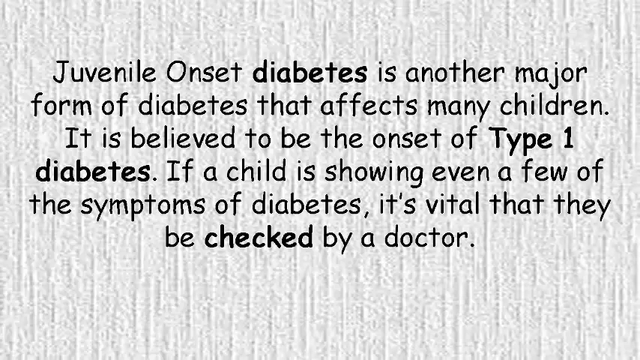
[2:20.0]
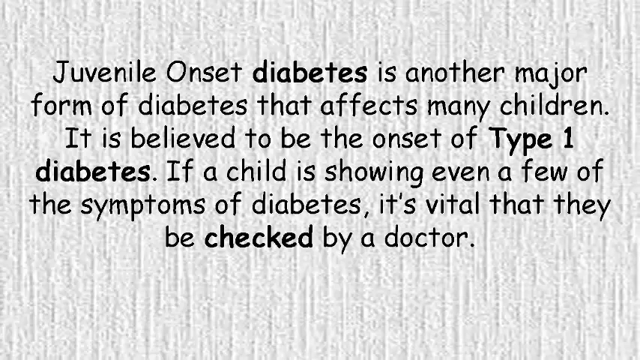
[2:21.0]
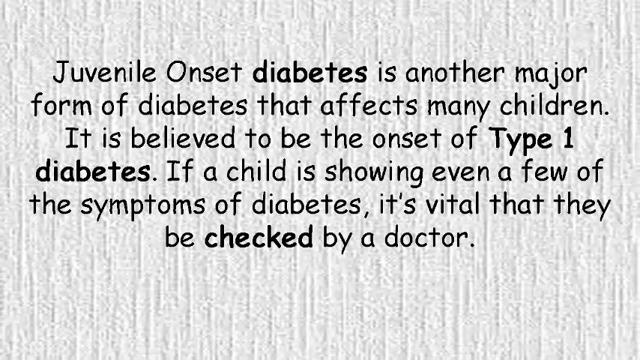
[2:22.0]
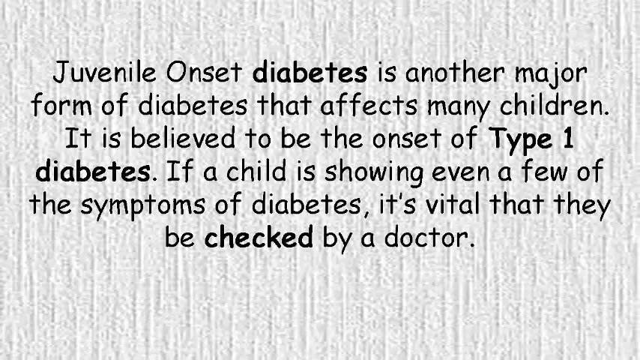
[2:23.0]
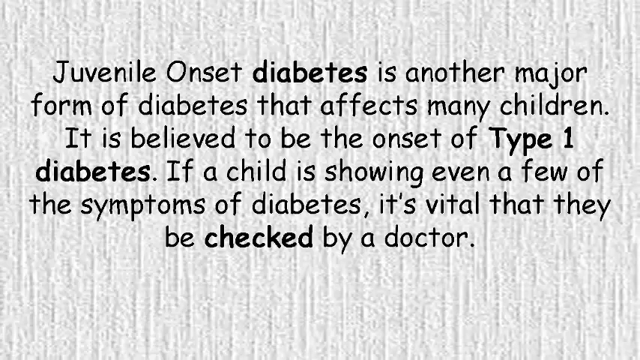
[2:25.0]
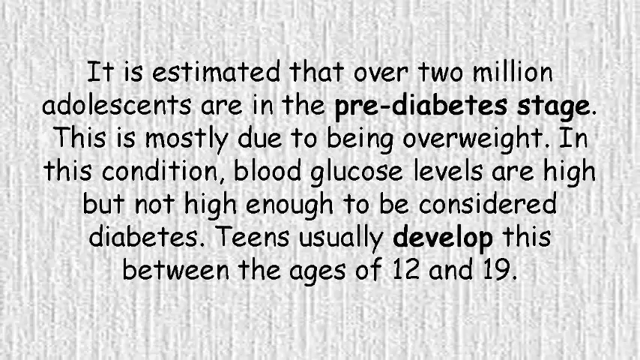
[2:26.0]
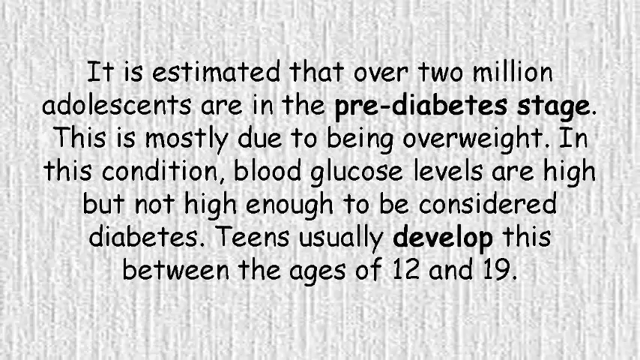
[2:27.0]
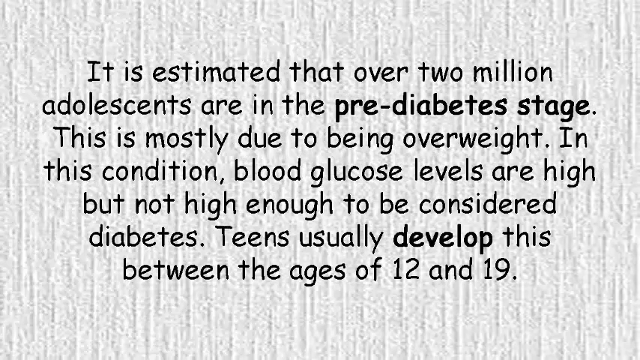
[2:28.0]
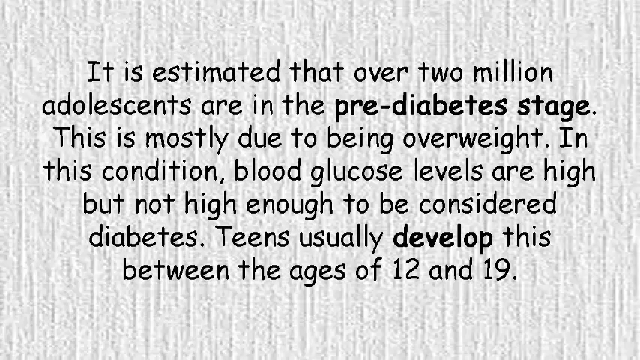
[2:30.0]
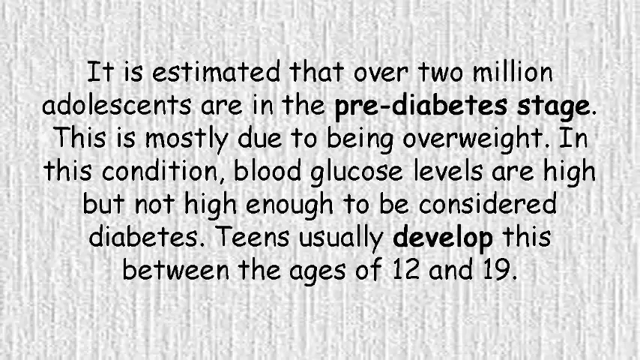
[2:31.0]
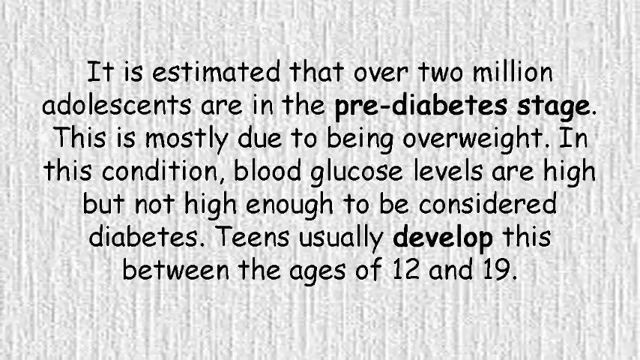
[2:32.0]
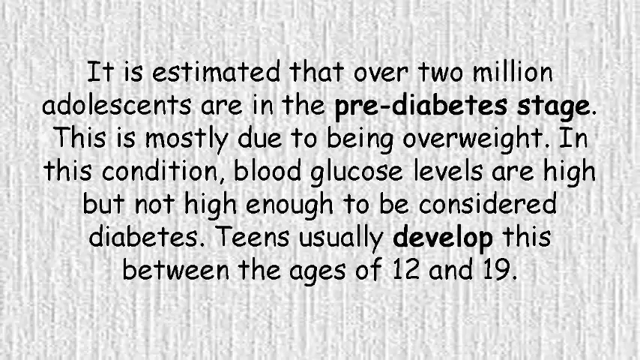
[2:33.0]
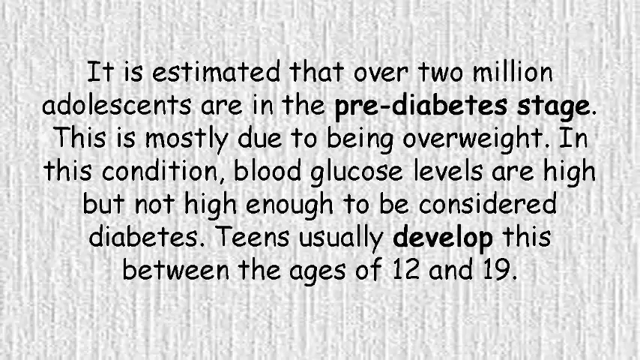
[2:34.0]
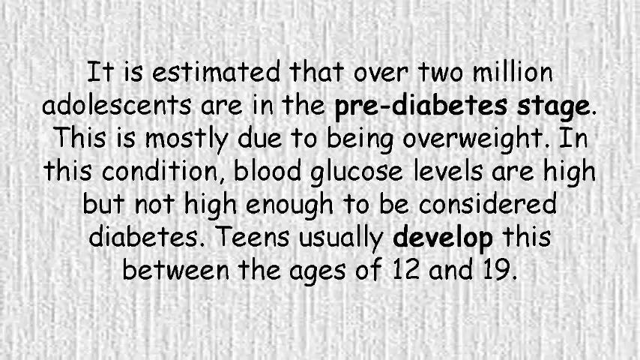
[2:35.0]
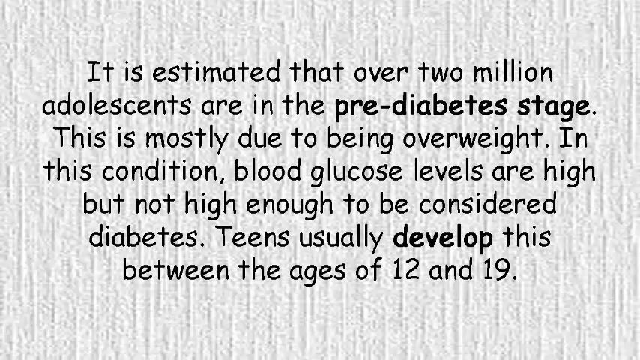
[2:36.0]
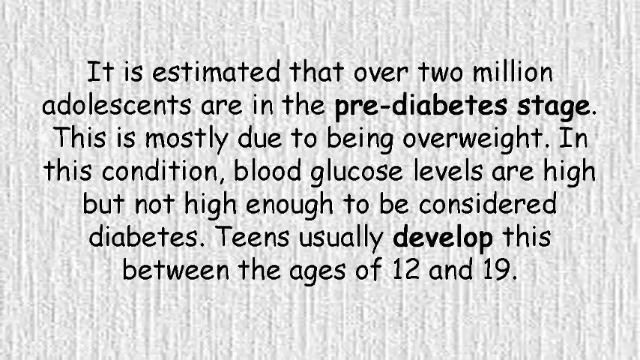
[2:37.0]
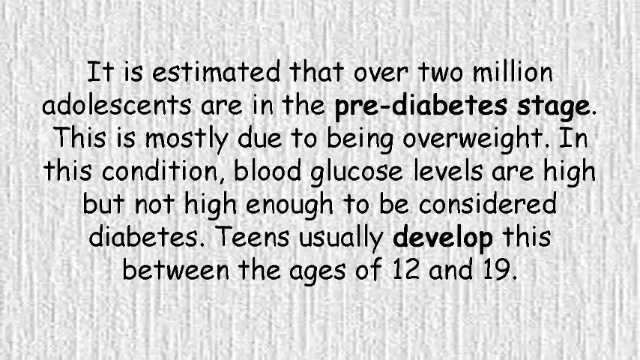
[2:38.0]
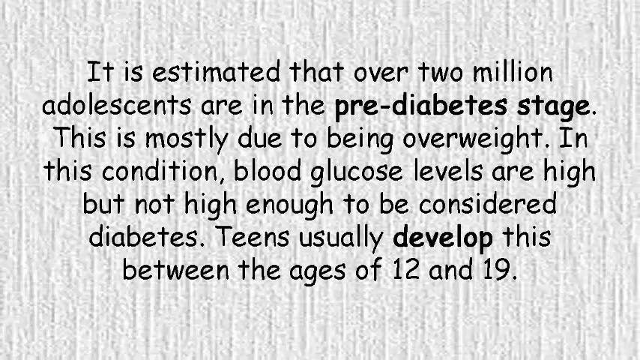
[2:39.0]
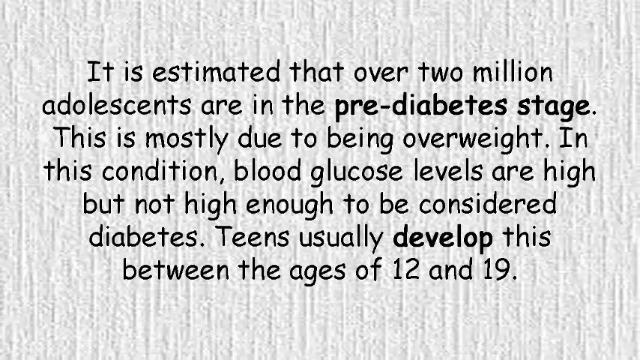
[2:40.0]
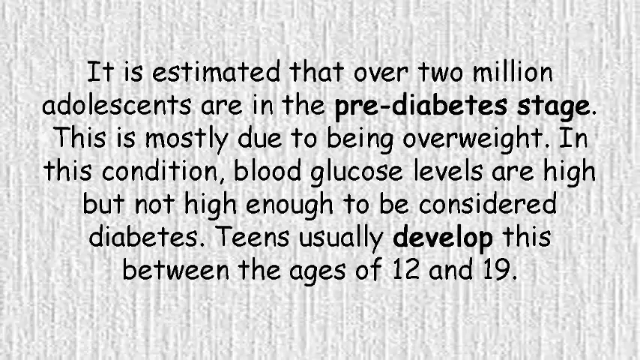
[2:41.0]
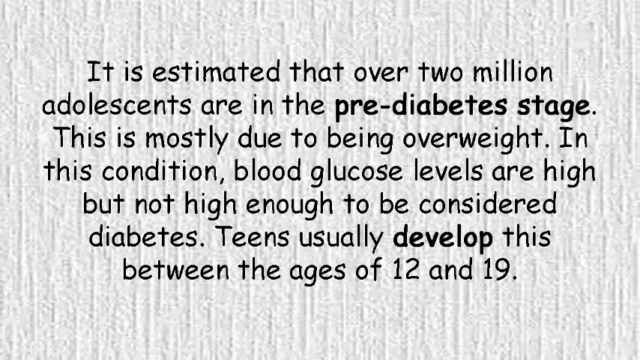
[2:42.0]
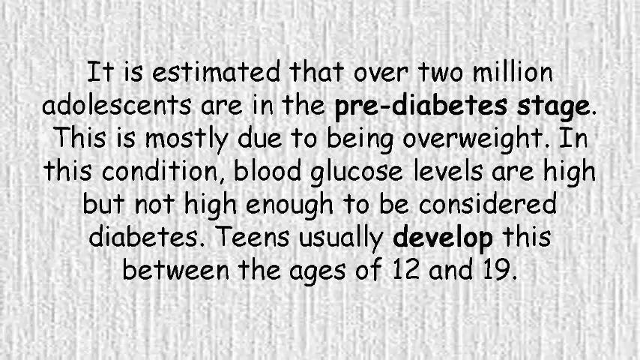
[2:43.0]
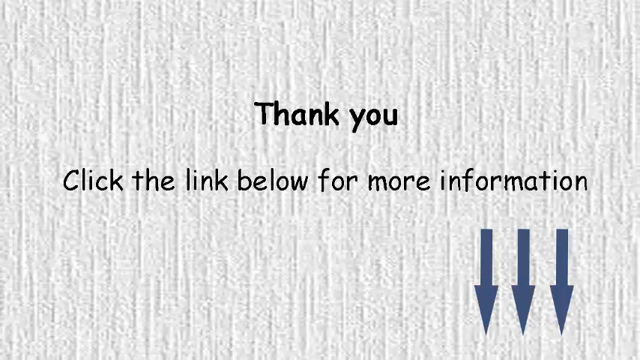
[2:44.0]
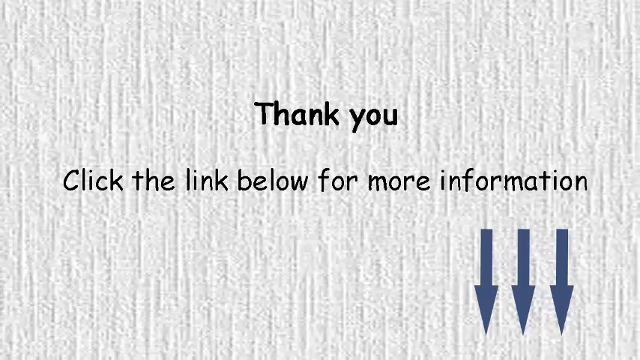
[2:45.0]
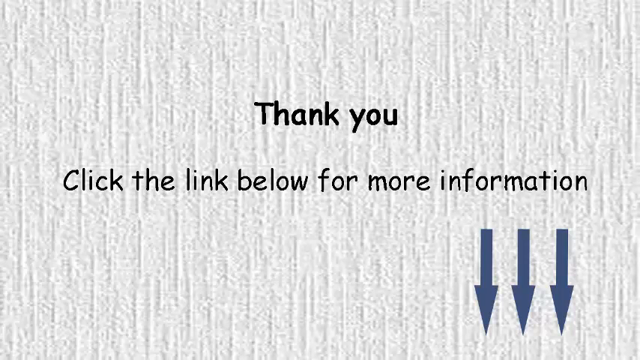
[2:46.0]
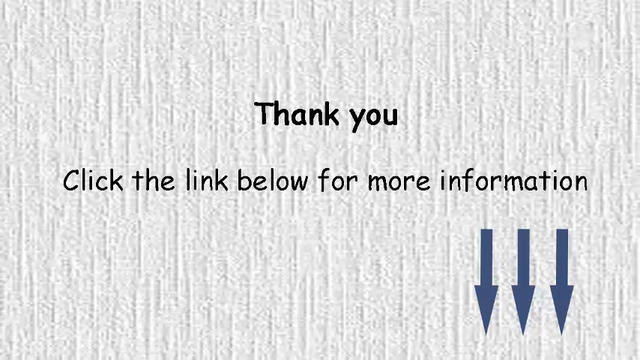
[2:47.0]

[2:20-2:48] A paragraph reads: "Juvenile onset diabetes is another major form of diabetes that affects many children. It is believed to be the onset of type 1 diabetes. If a child is showing even a few of these symptoms of diabetes, it's vital that they get checked by a doctor." The words "diabetes", "type 1 diabetes" and "checked" are in bold. The next paragraph reads: "It is estimated that over two million adolescents are in the pre-diabetes stage. This is mostly due to being overweight. In this condition, blood glucose levels are high, but not high enough to be considered diabetes. Teens usually develop this between the ages of 12 and 19." It stays on screen for a few seconds, then the screen reads "Thank you. Click the link below for more information." with "Thank you" in bold. In the lower right part of the screen are three identical blue arrows in a row, all pointing down.